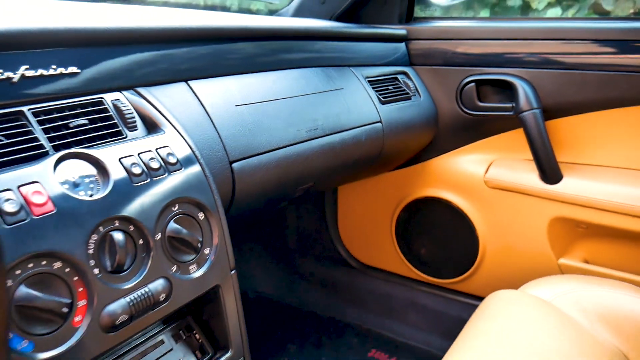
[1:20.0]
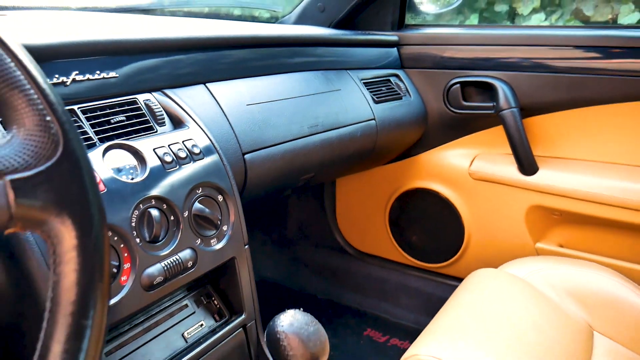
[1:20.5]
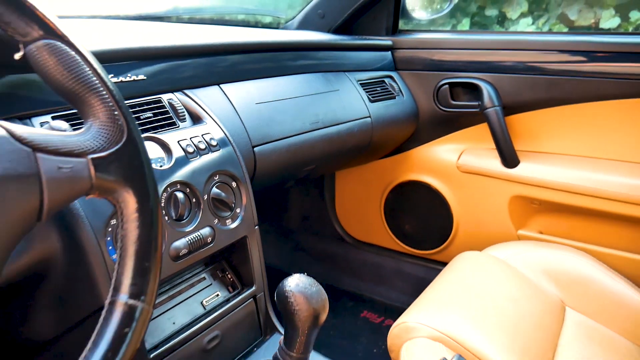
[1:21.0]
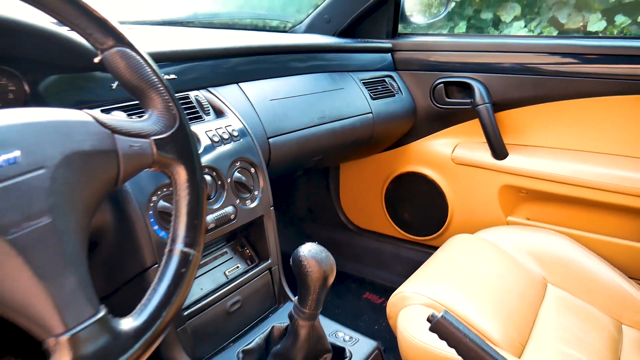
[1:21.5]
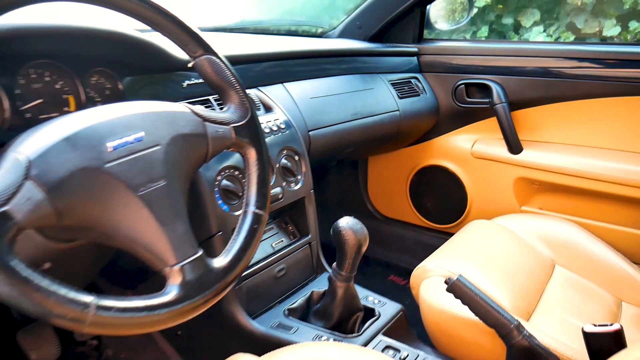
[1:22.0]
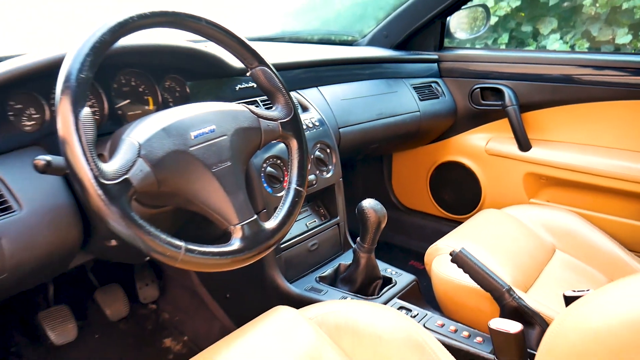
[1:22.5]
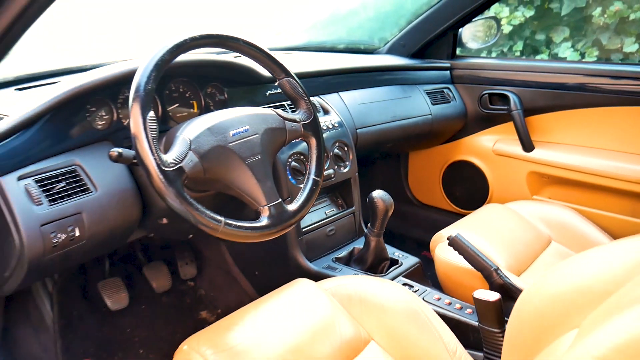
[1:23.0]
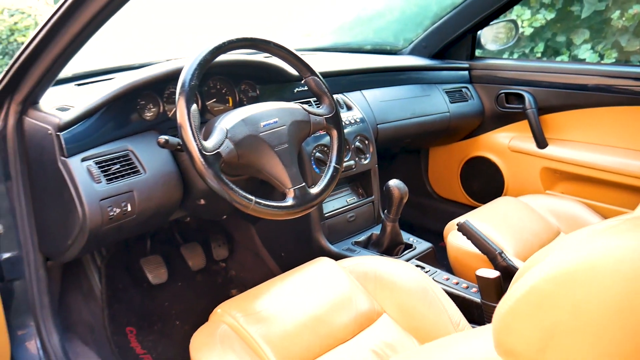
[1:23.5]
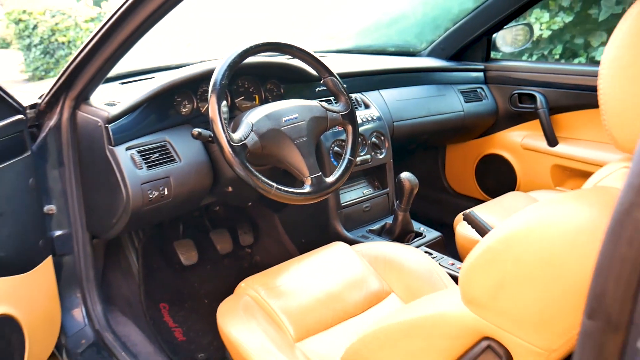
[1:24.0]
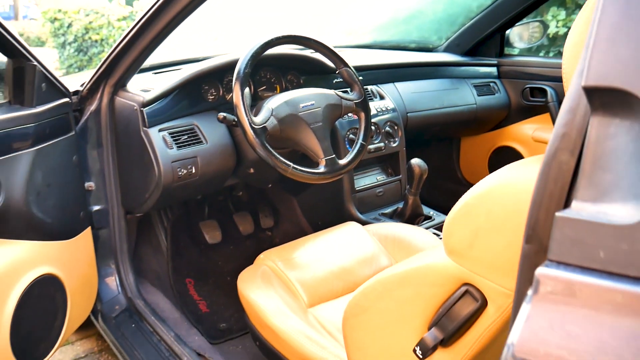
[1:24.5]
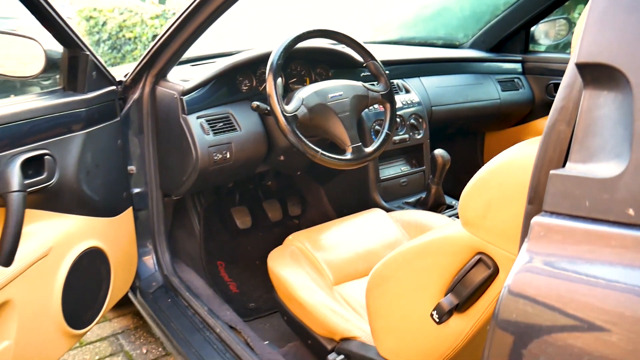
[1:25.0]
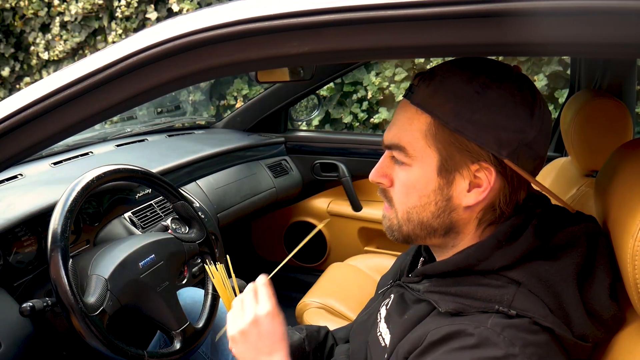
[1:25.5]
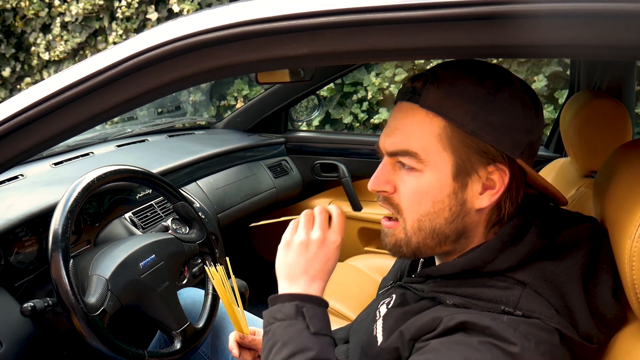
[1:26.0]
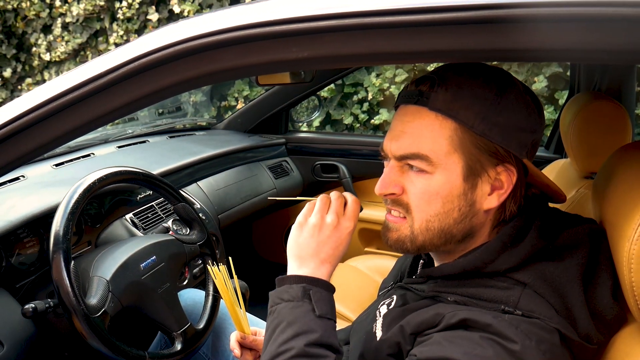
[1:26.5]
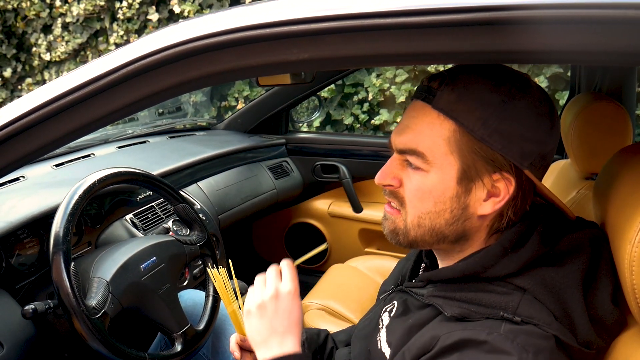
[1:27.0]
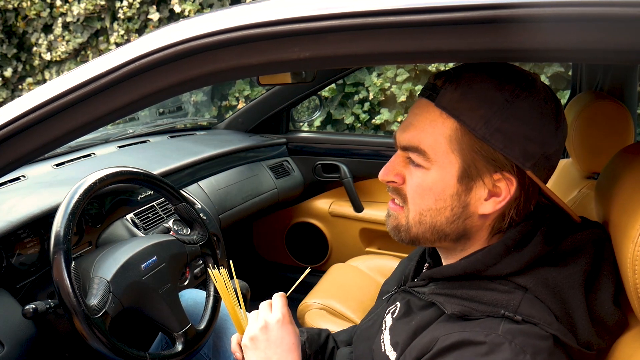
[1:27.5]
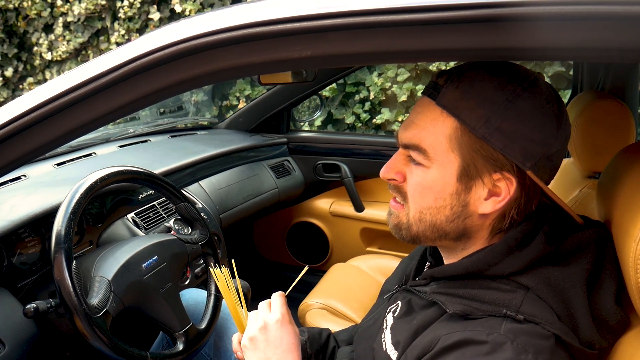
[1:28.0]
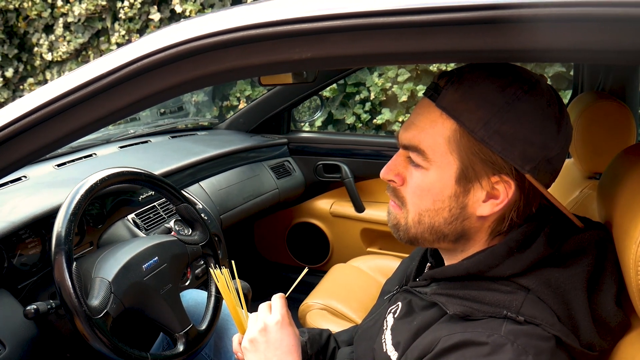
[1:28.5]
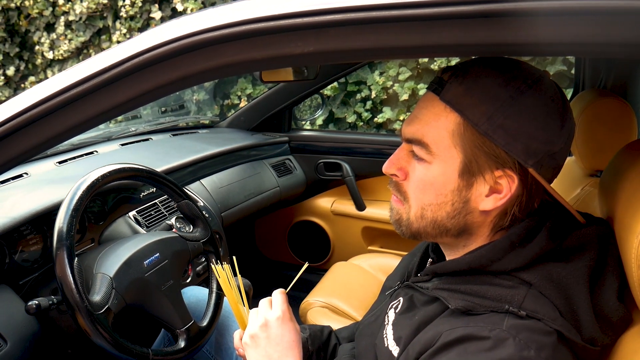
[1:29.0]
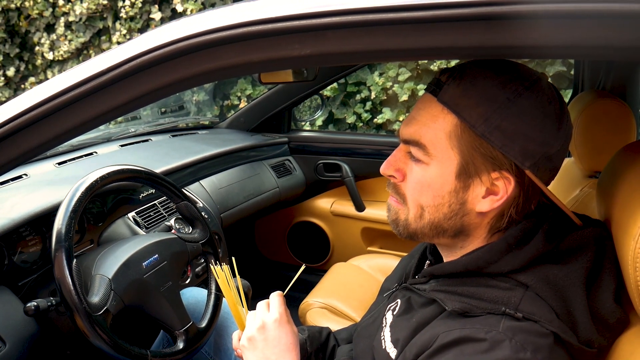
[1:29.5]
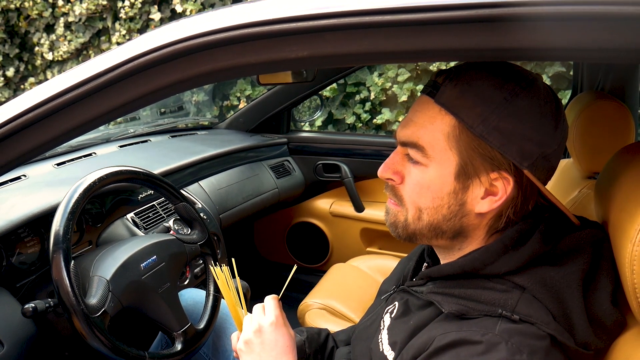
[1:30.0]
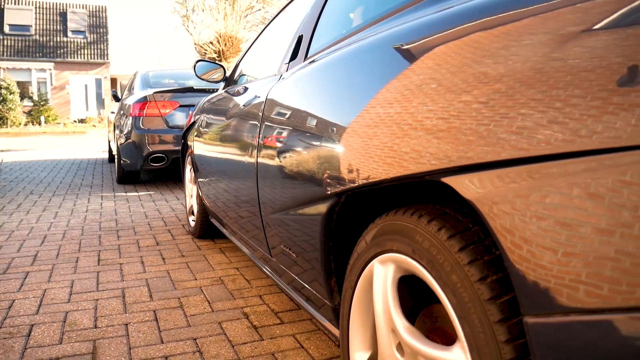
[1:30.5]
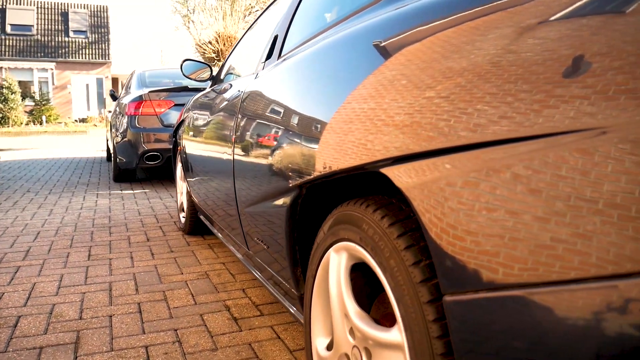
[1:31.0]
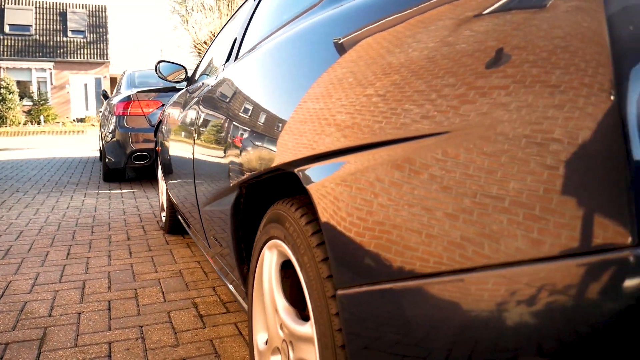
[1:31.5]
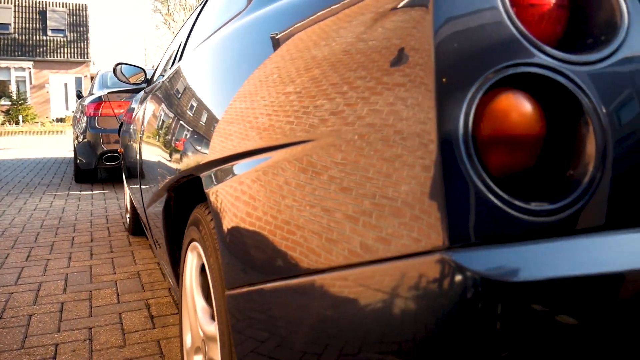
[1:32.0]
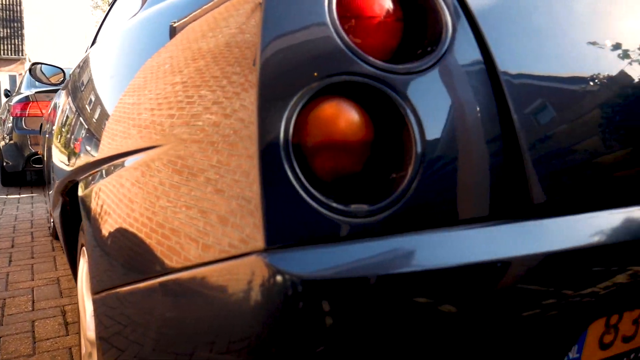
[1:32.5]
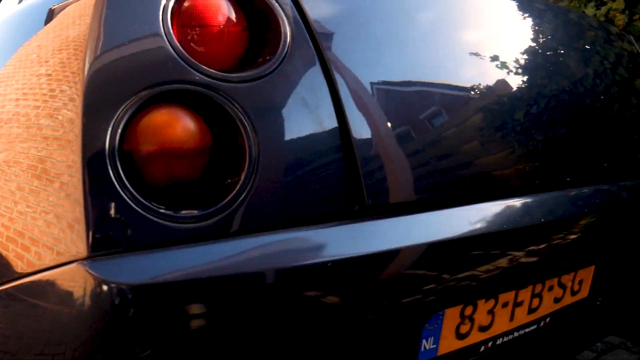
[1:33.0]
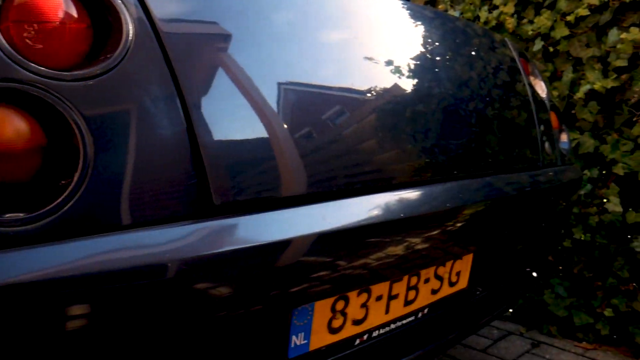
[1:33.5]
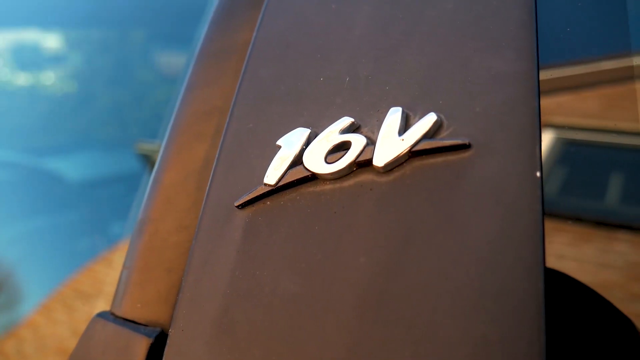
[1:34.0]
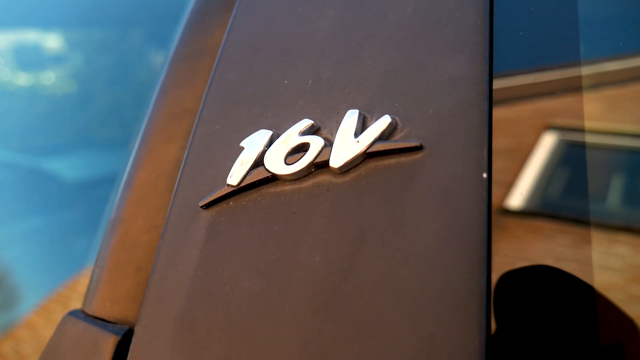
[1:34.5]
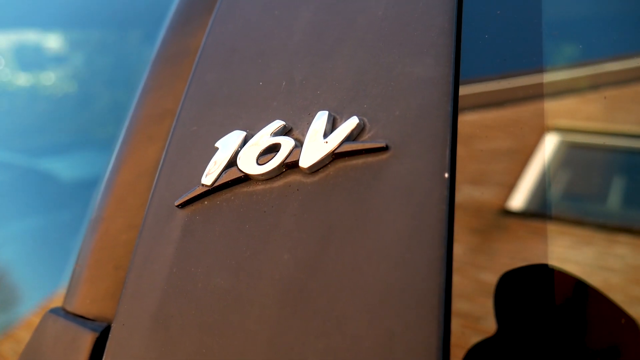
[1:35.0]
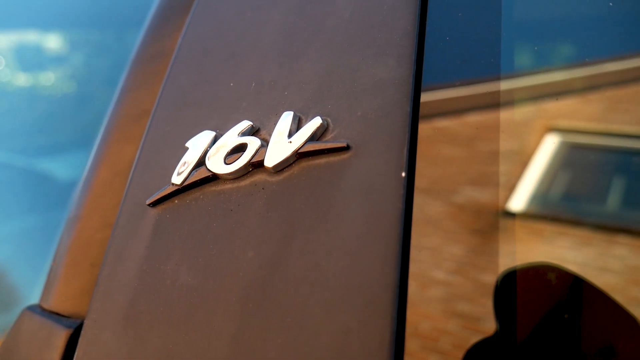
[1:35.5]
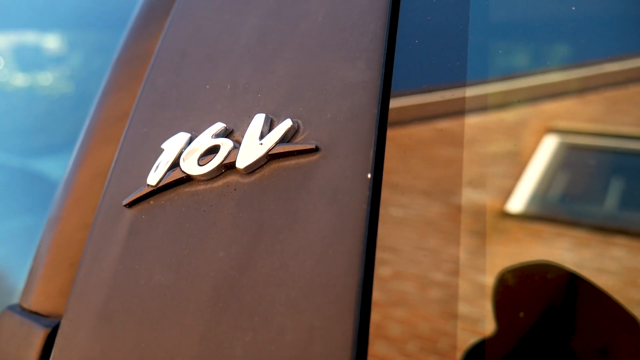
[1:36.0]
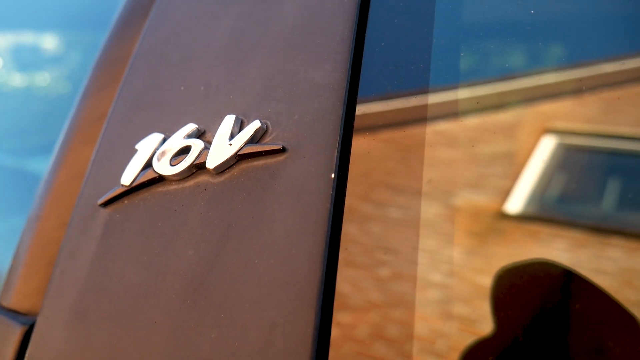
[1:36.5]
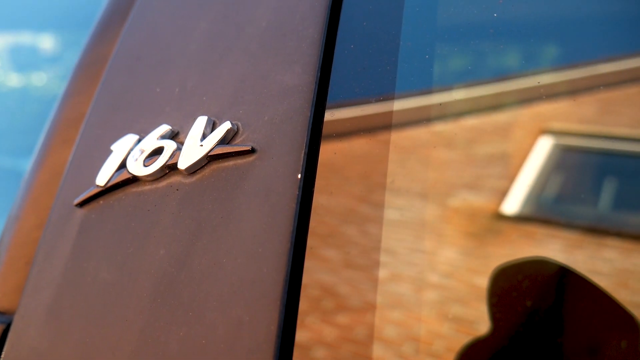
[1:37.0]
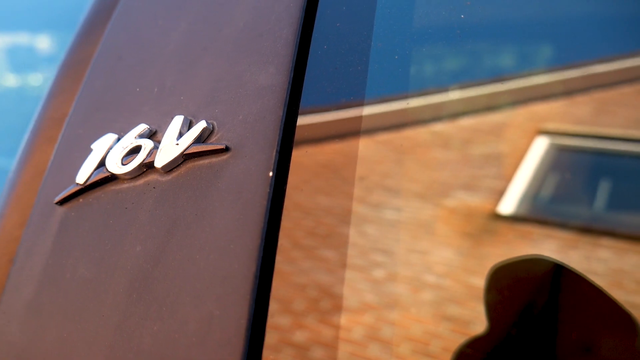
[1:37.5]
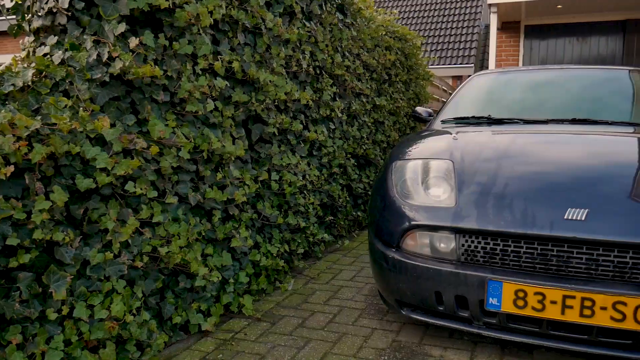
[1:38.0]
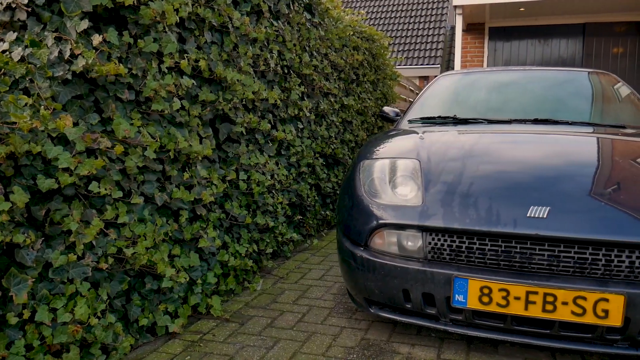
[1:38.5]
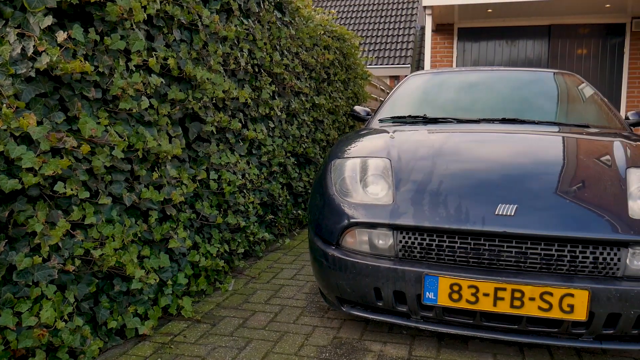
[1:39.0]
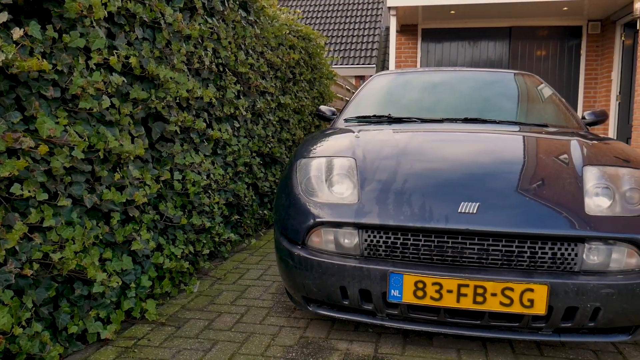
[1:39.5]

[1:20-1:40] On the dashboard are two air conditioning vents with little dials to turn them, and a circle in the middle whose display cannot be made out. There are three buttons on the right and two on the left, all black except for one red one. Under them are about three knobs, apparently for the AC. It looks like a stick shift, with the gears and the emergency brake visible. The steering wheel is all black, with controls coming off of it. There is another air conditioning vent on the driver's side, with what looks like some controls directly under it. The video then shows the guy sitting in the car, apparently eating some grain or something, and then two cars parked on the paved driveway.